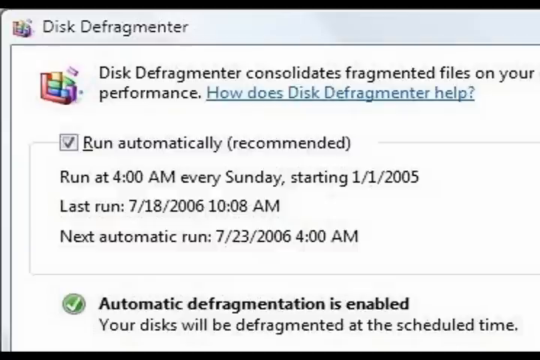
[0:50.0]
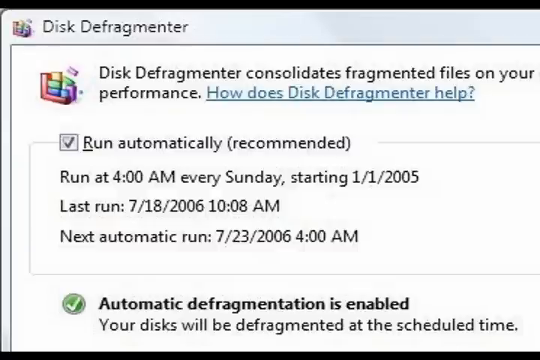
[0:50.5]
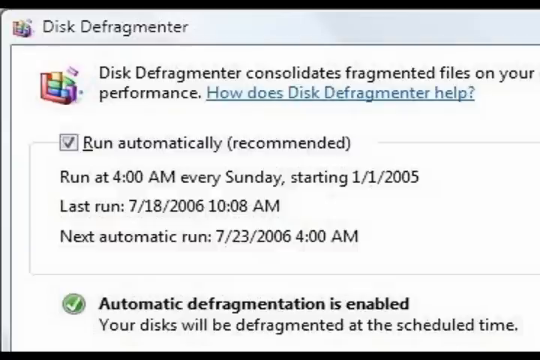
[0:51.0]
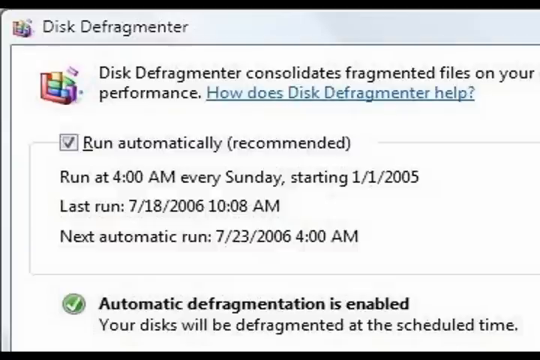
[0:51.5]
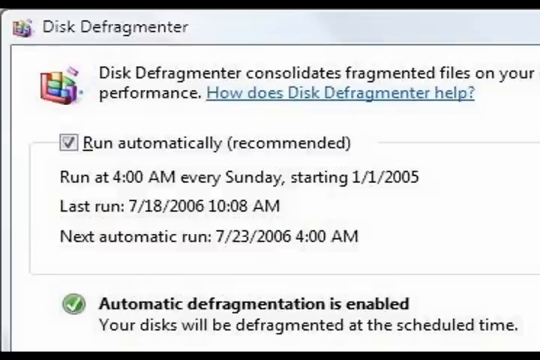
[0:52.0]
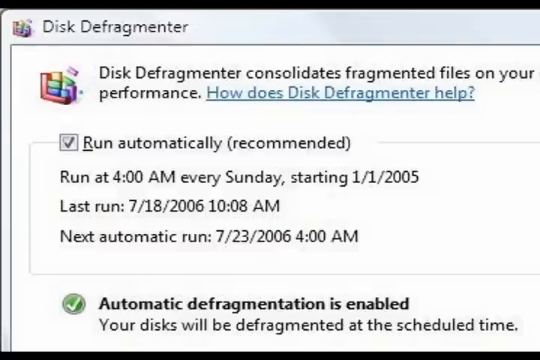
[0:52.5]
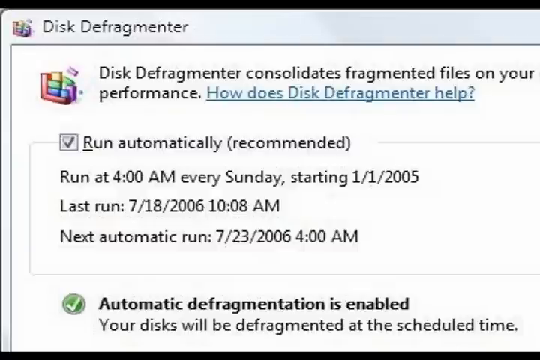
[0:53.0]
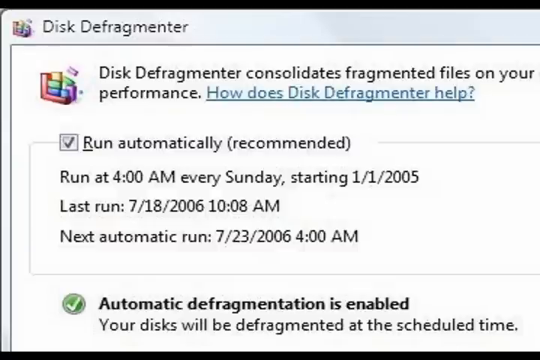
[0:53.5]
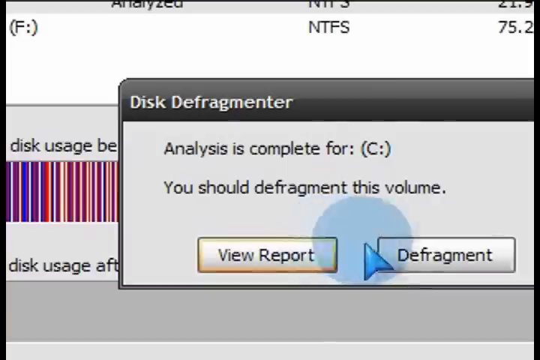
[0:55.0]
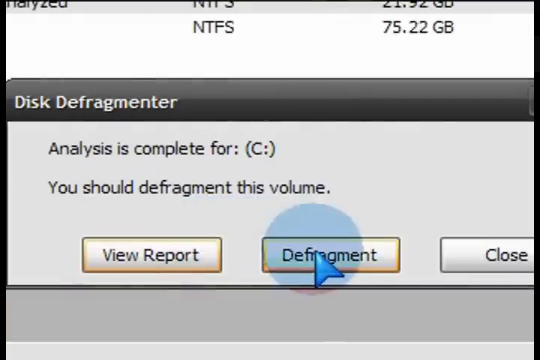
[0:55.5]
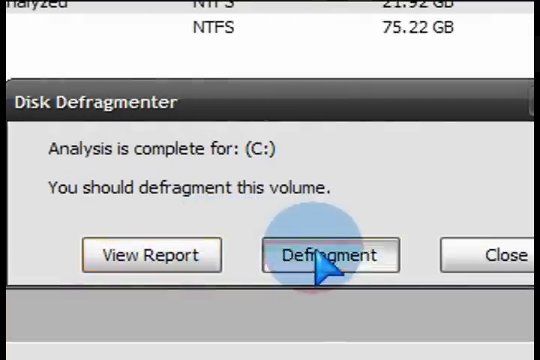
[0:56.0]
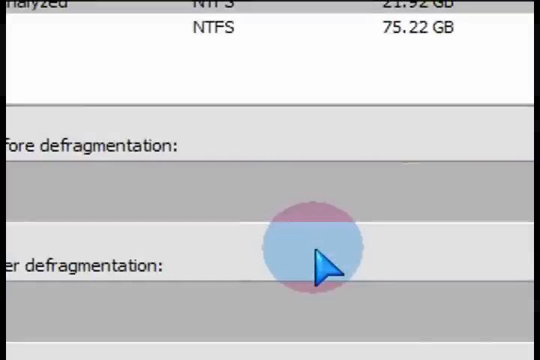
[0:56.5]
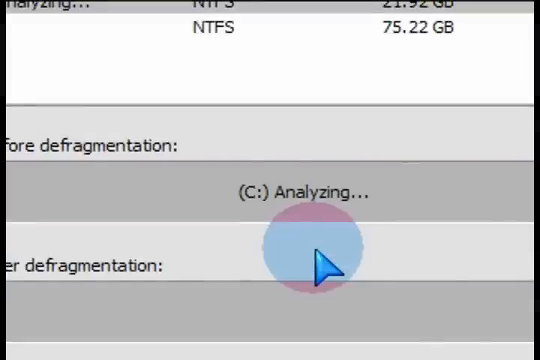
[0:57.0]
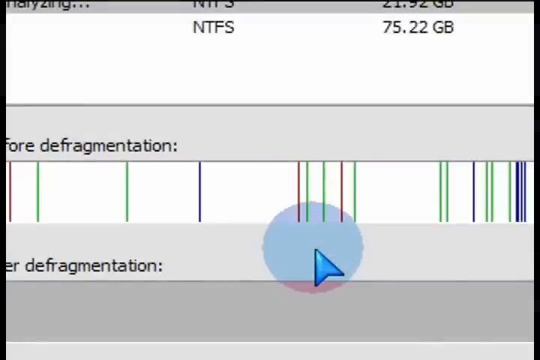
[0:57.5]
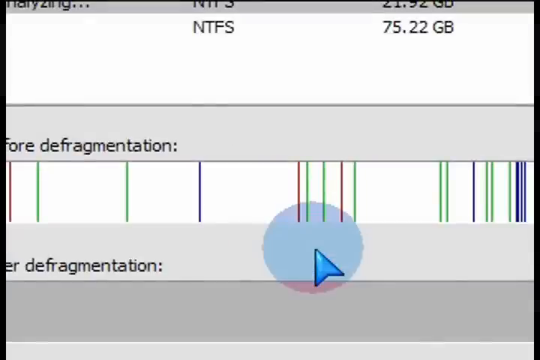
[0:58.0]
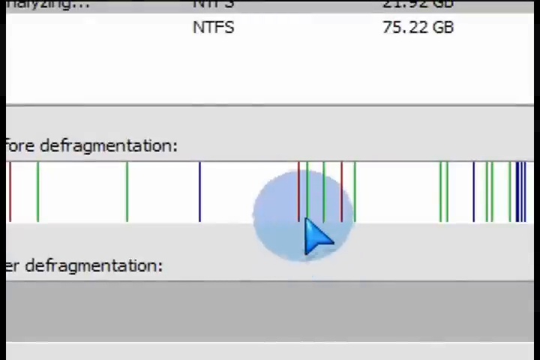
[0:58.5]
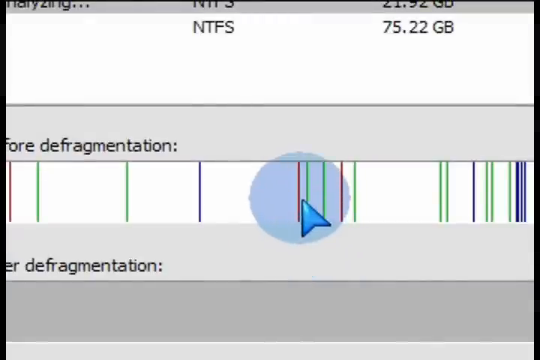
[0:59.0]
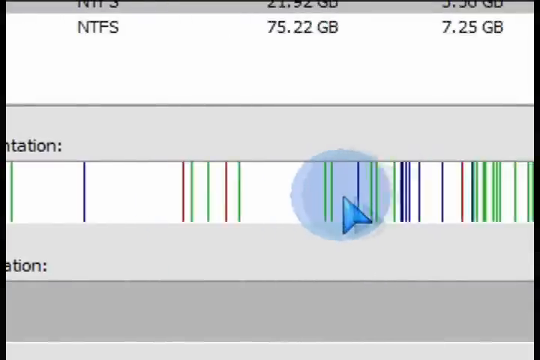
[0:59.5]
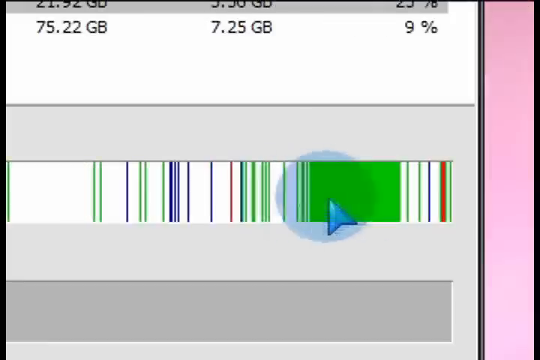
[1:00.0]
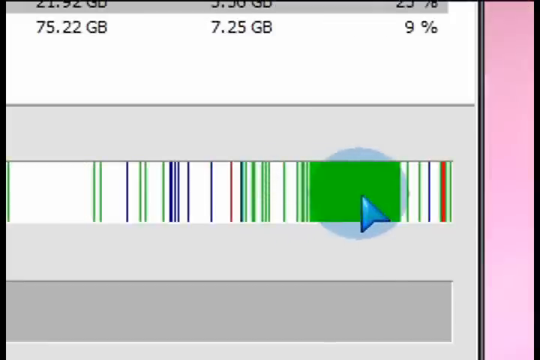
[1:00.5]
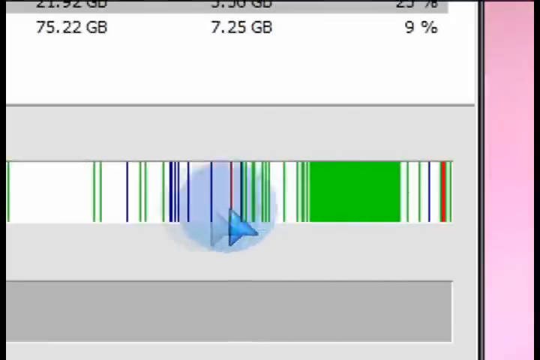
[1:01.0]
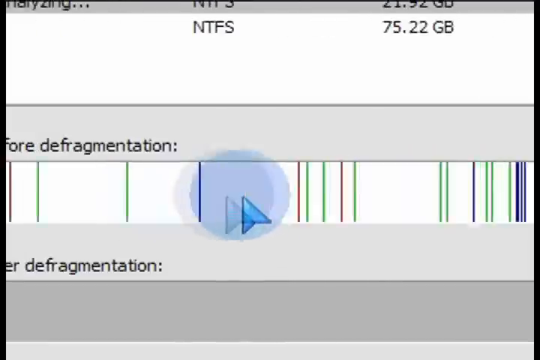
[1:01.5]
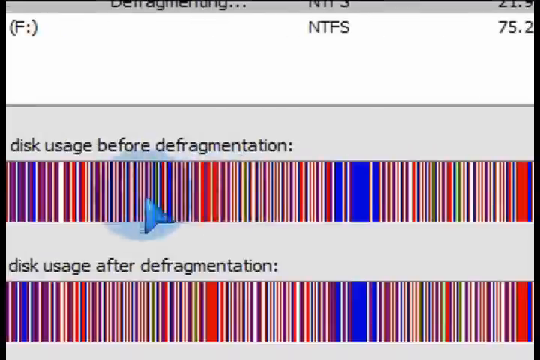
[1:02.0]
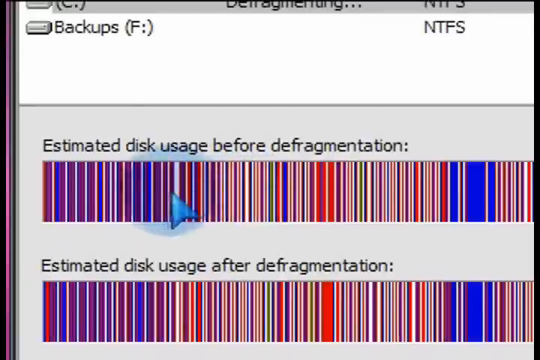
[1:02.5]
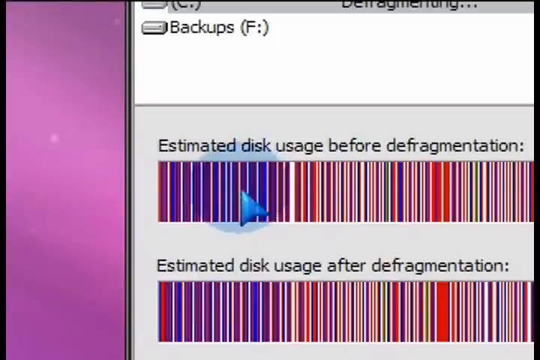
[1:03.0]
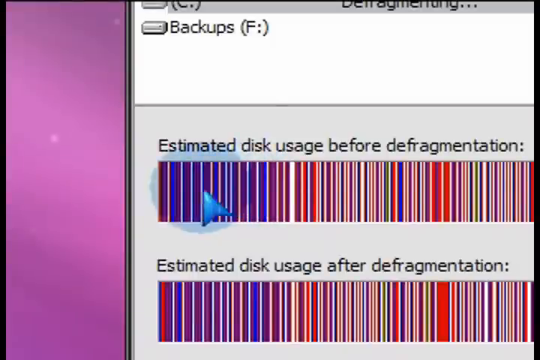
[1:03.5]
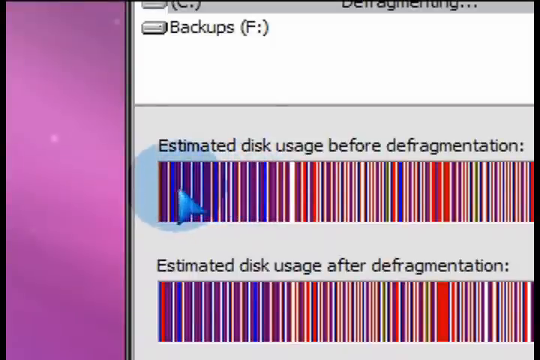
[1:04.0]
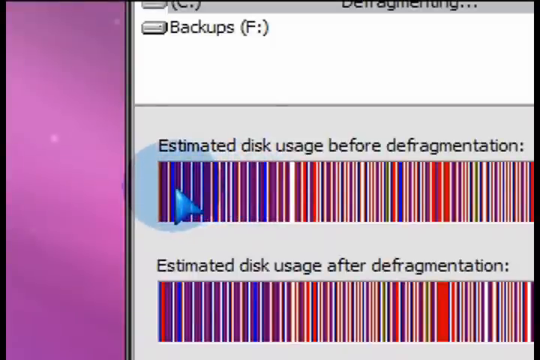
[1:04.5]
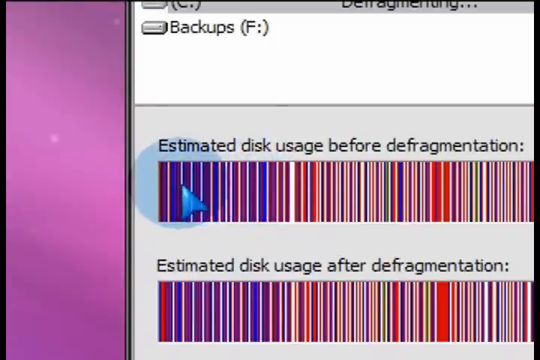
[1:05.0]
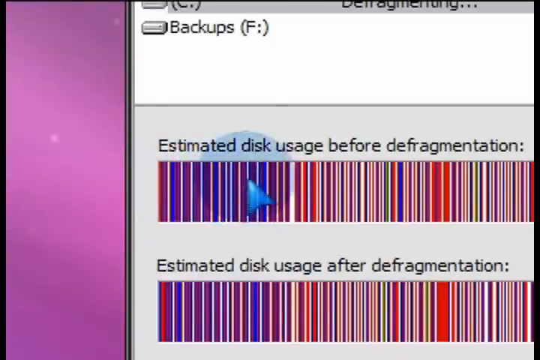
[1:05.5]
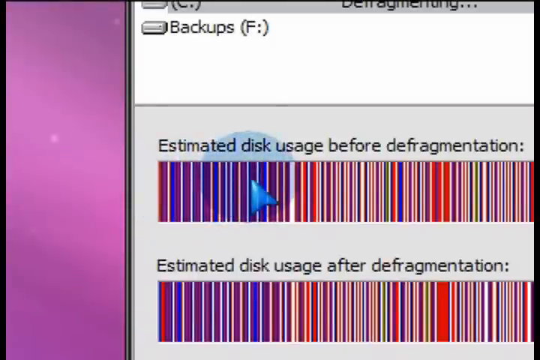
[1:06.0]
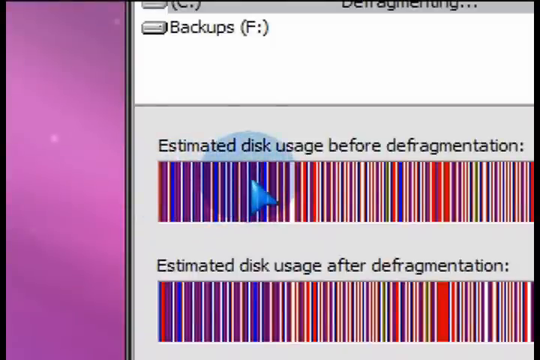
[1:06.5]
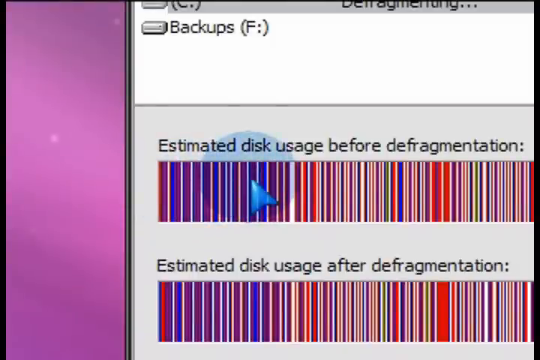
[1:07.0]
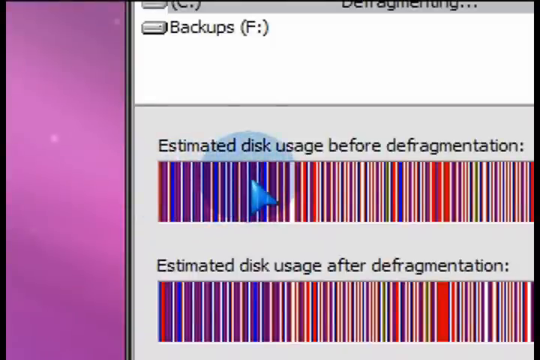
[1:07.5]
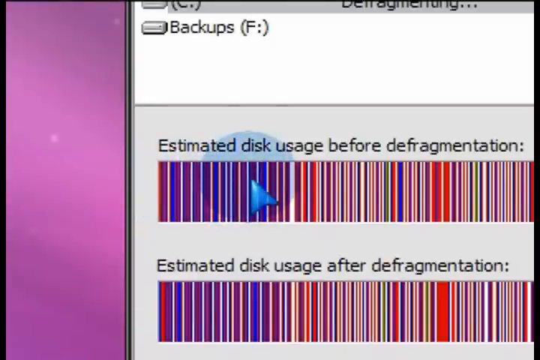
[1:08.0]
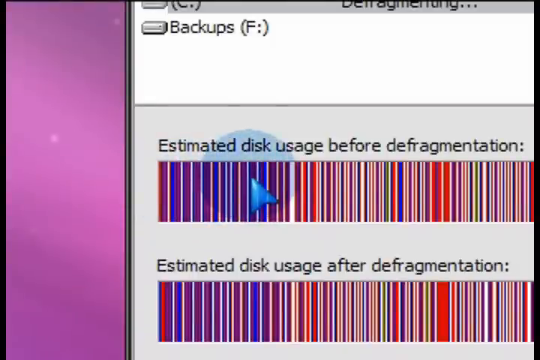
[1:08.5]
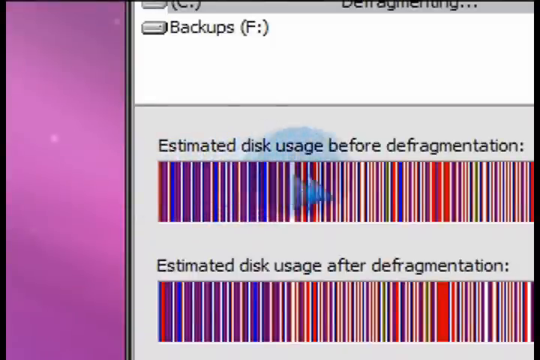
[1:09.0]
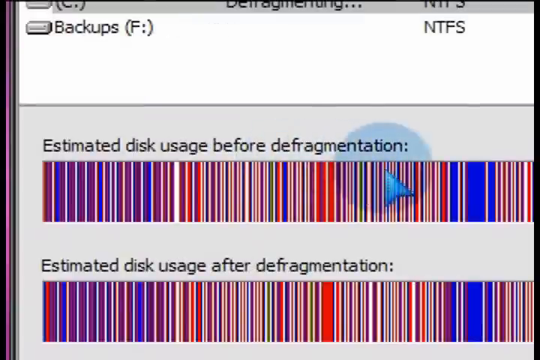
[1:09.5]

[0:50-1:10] The screen again shows that automatic defragmentation is enabled, and it seems to show the colors and their meanings. The user moves the mouse around. The "Run automatically (recommended)" page appears, along with the message that analysis is complete for C and the volume should be defragmented. The user apparently clicks Defragment, and the process starts running, with visible movement. Displays of estimated disk usage before defragmentation and estimated disk usage after defragmentation show a clear difference, with green and gaps between used and unused space. A View Report button is also visible.